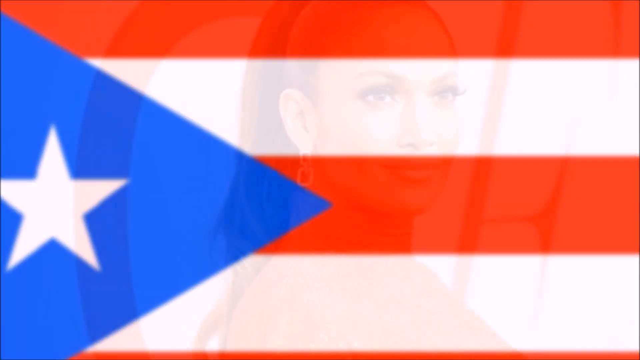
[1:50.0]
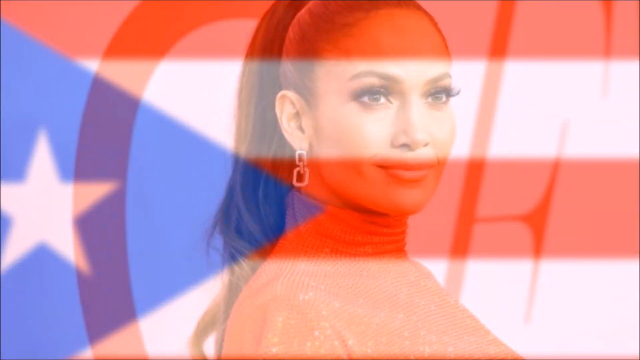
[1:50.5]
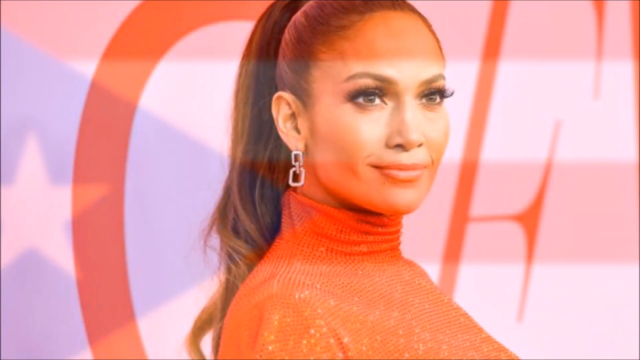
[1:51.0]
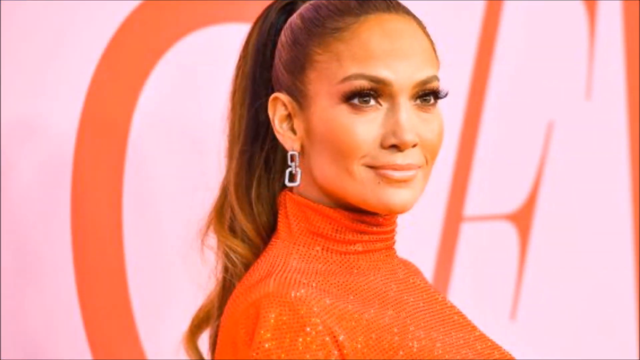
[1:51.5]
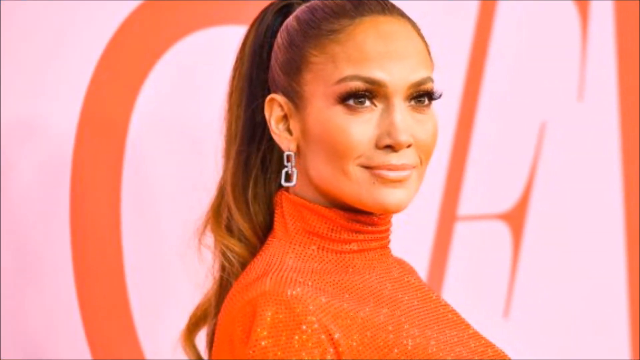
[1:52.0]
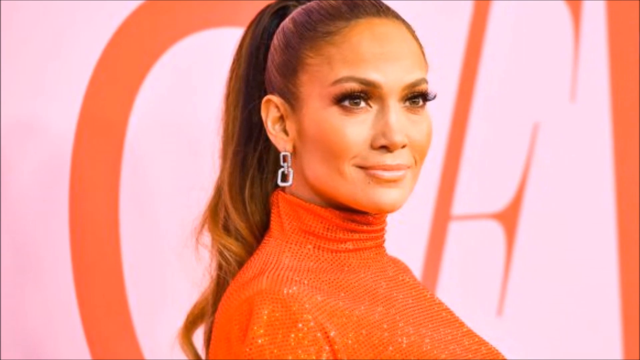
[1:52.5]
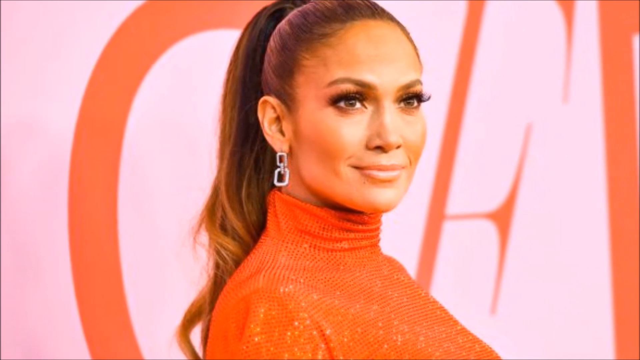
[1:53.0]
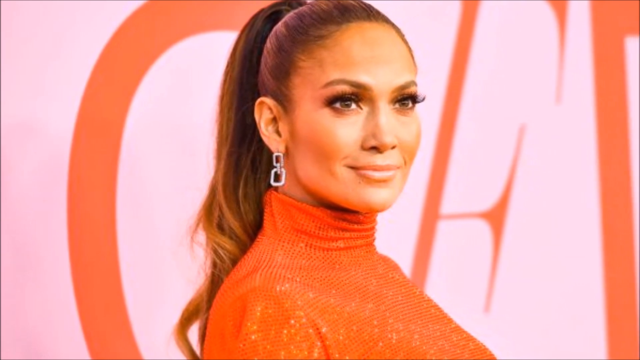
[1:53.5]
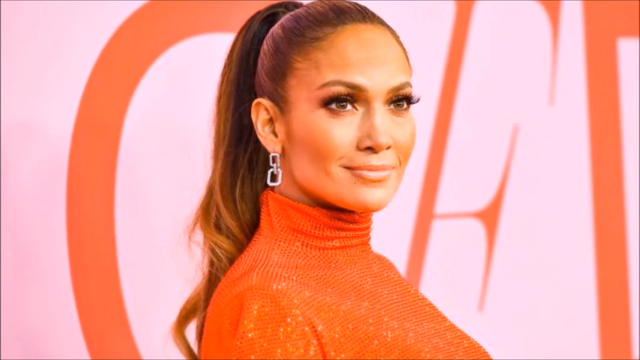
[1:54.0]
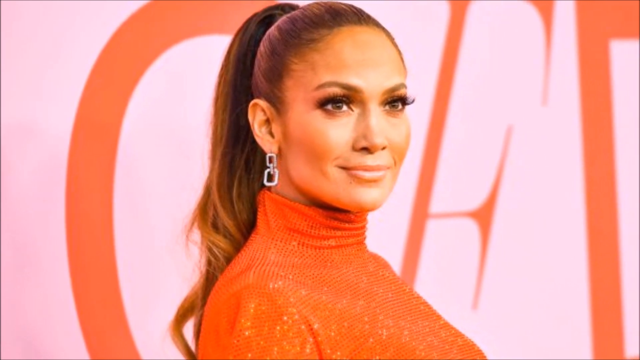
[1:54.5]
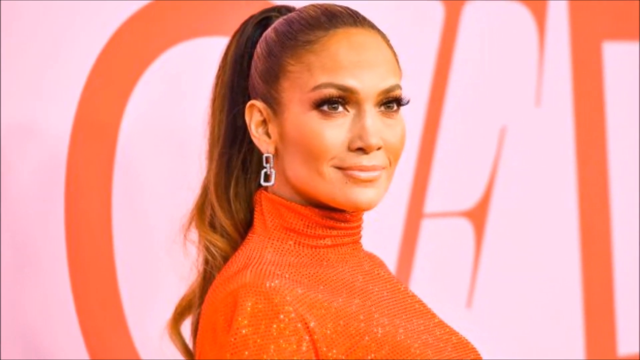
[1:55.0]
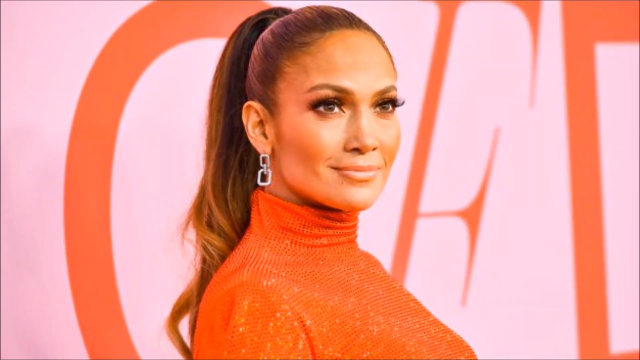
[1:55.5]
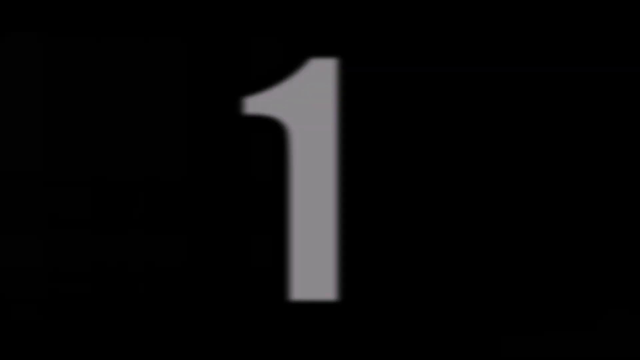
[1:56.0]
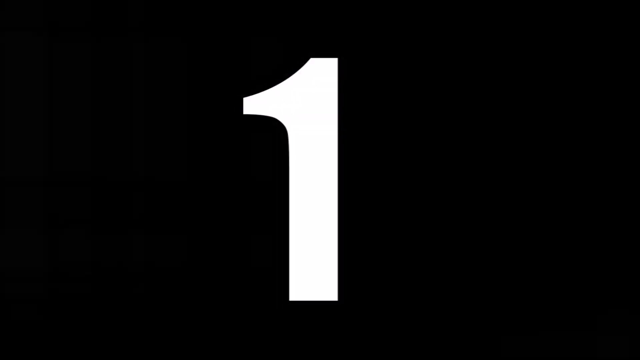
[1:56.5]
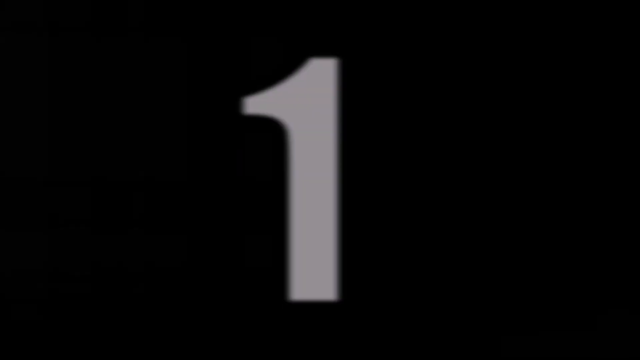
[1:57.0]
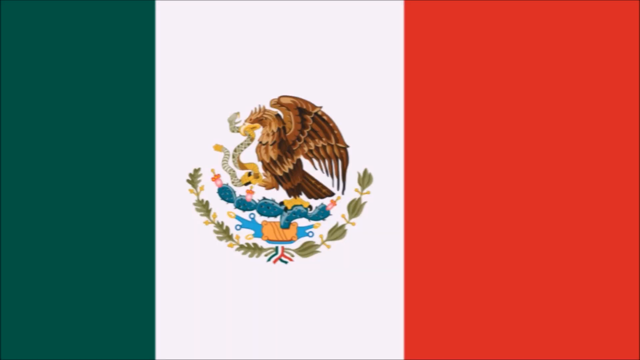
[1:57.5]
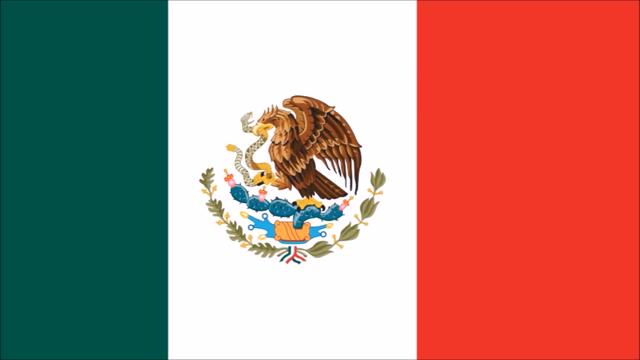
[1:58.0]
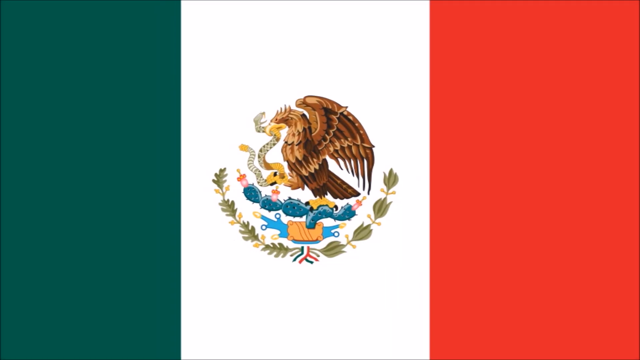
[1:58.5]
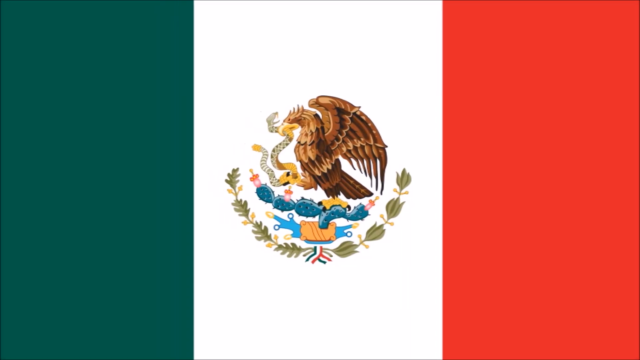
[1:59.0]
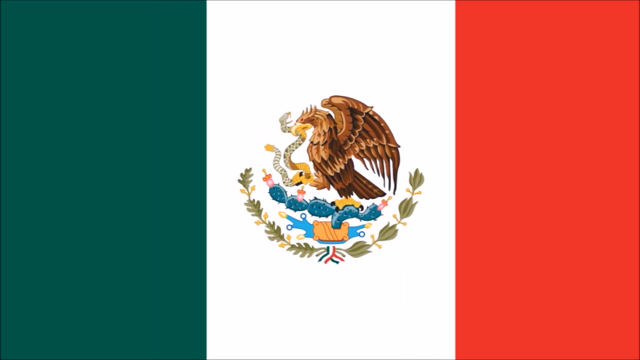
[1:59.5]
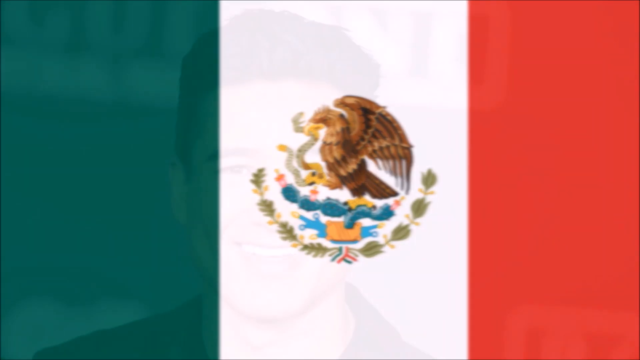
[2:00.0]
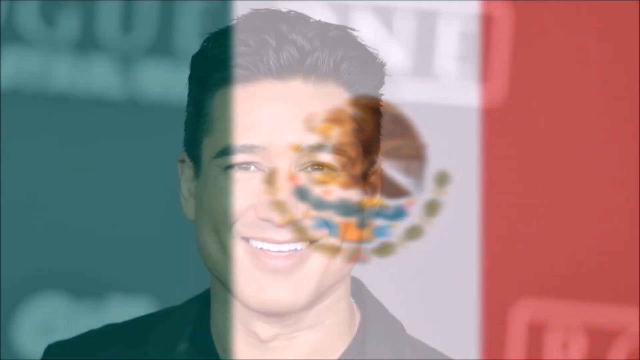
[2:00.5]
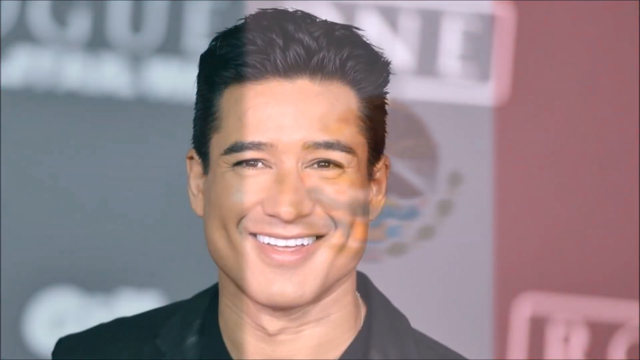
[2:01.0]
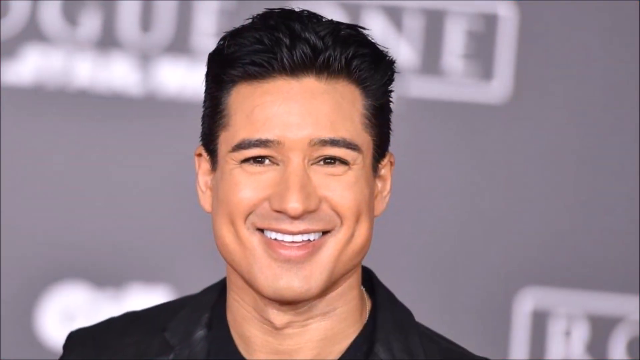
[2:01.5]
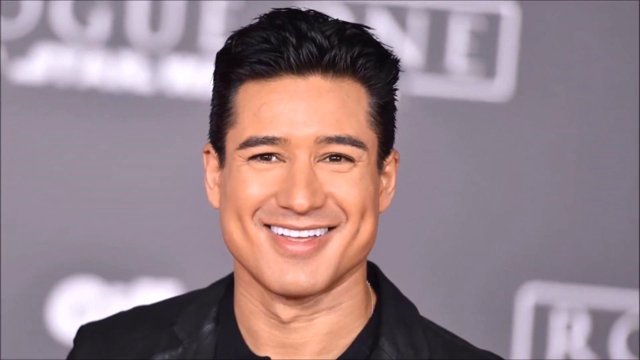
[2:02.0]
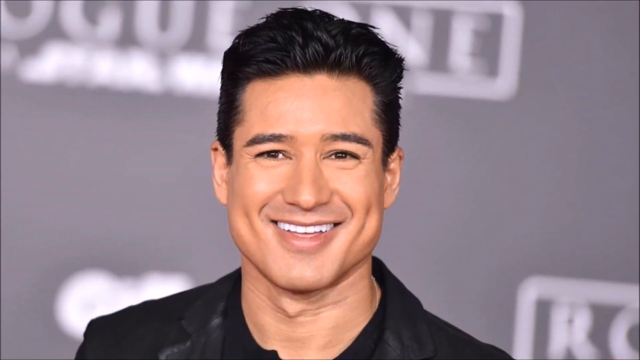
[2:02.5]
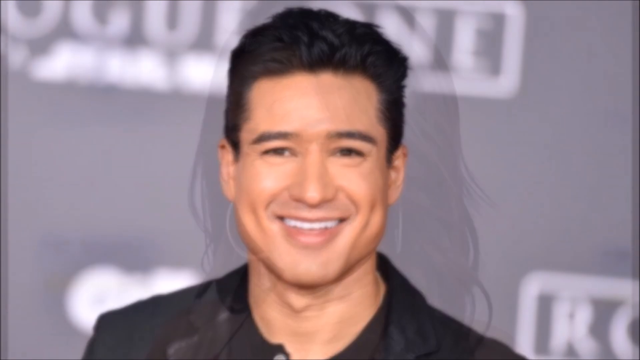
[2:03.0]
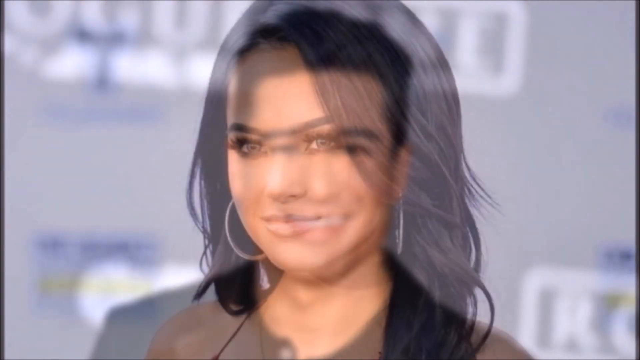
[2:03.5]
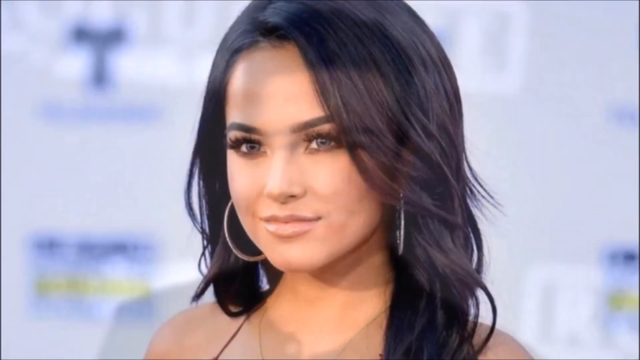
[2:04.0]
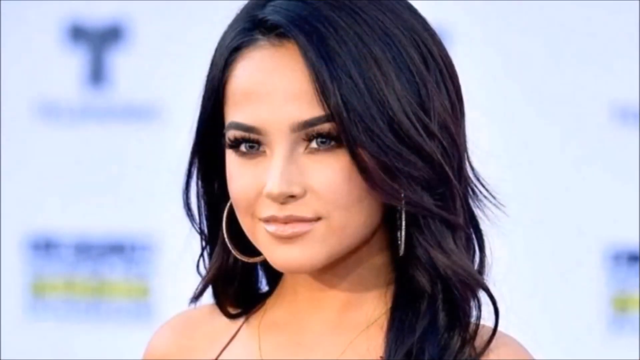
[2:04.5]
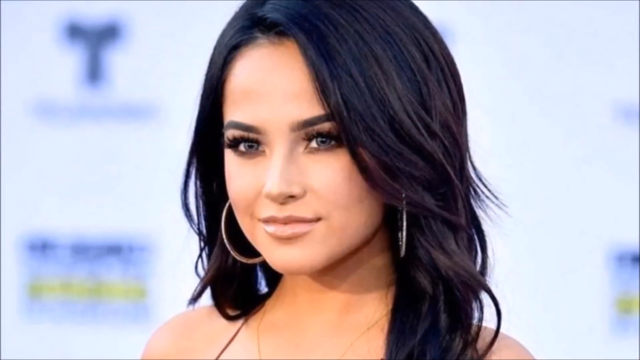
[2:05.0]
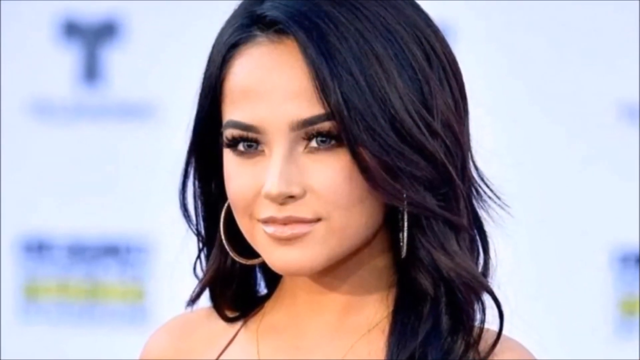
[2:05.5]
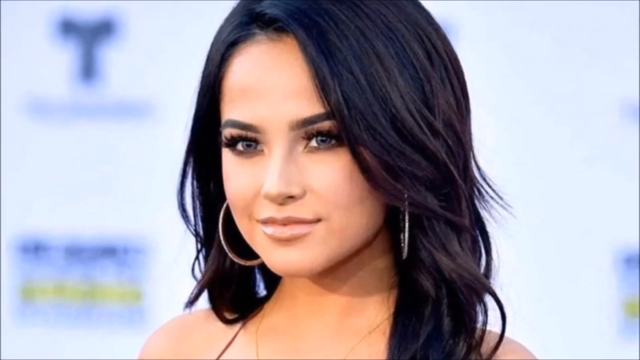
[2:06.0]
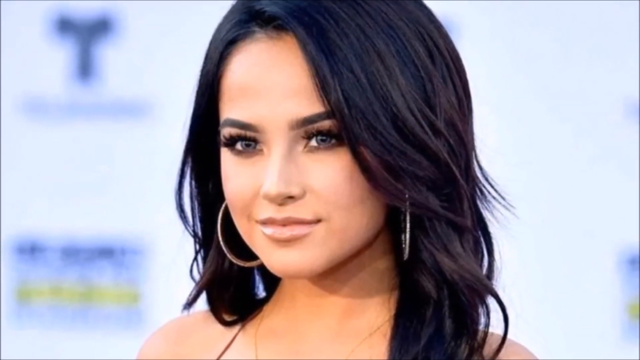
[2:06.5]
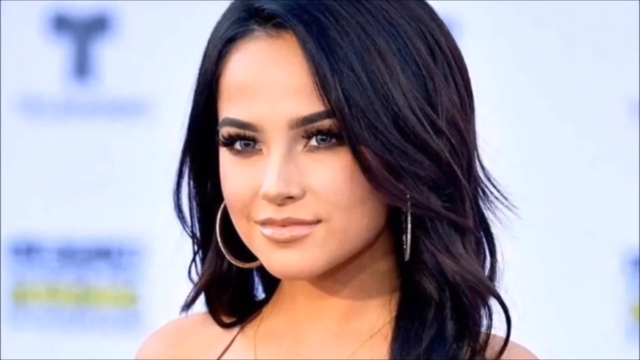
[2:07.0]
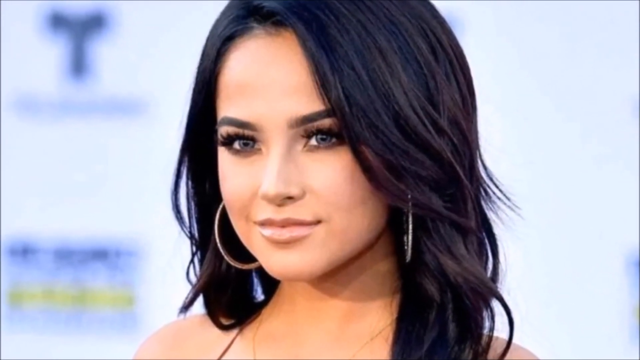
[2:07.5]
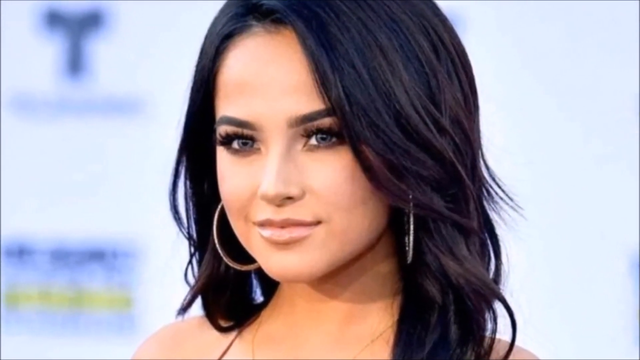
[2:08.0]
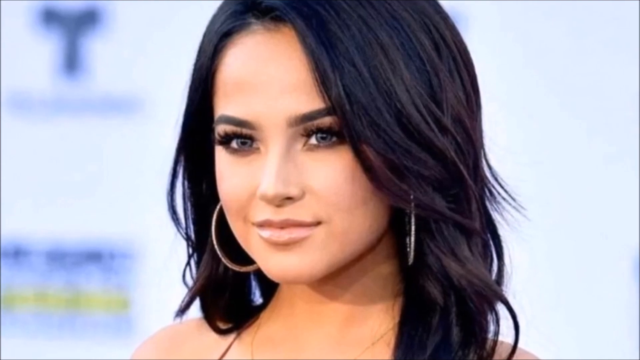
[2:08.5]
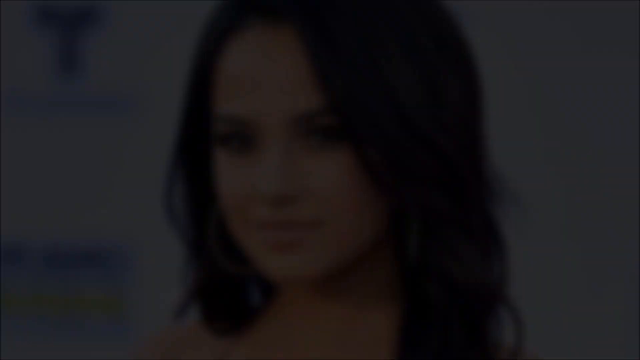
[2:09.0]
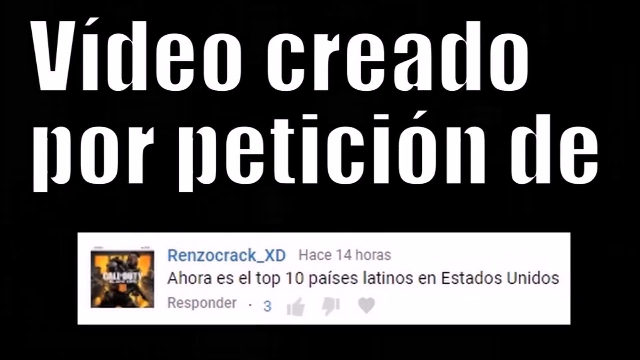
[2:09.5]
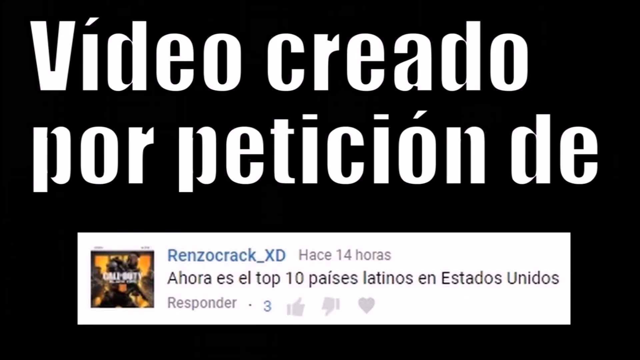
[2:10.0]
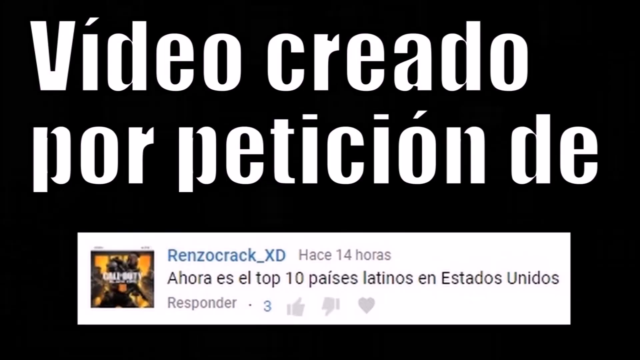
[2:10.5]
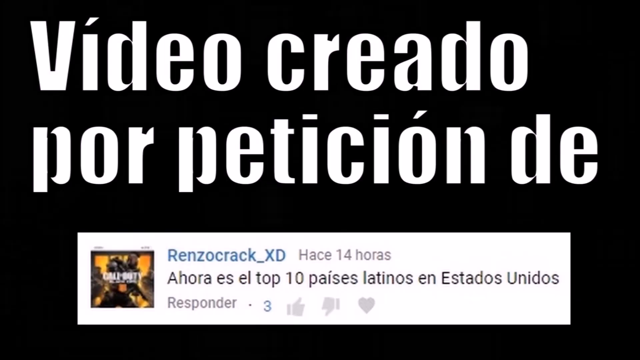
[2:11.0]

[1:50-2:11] A close-up shows the Puerto Rican flag, with five alternating red and white stripes on the right and a blue triangle with a white star in its center on the left. A photograph of Jennifer Lopez follows: she looks slightly to the side, smiling, with her hair pulled back in a ponytail, wearing an orange turtleneck dress and earrings that look like chain links, the upper link smaller than the lower one. She looks like she is on a red carpet. The number one then appears against a black backdrop, followed by the Mexican flag, with vertical green, white and red stripes and, in the center of the white stripe, an image of a bird eating a snake while sitting on a cactus. A close-up shows the actor Mario Lopez, who has black hair, wears a black shirt and smiles at the camera. Then comes a photo of a woman with long black hair and green eyes, looking slightly to the side and smiling, wearing very large silver hoop earrings. At the very end, a screen in Spanish shows text at the top against a black background, with a little of a social media post below it.